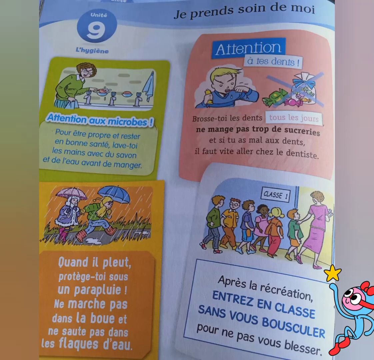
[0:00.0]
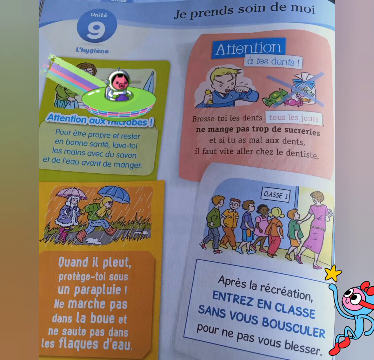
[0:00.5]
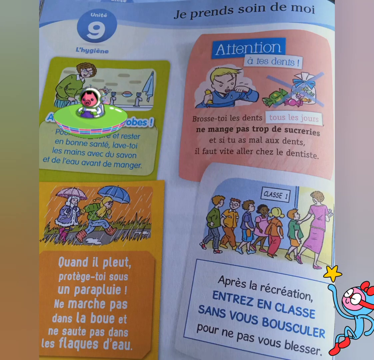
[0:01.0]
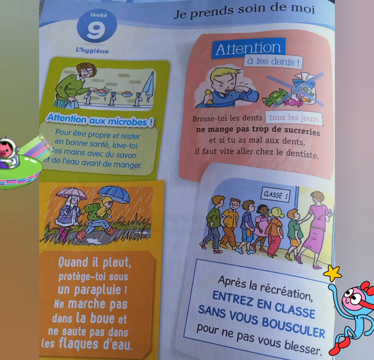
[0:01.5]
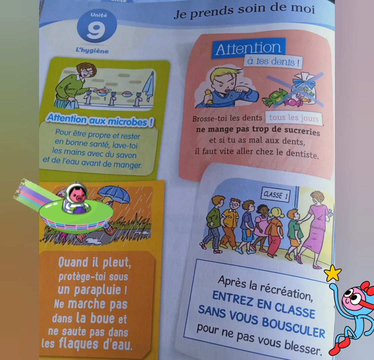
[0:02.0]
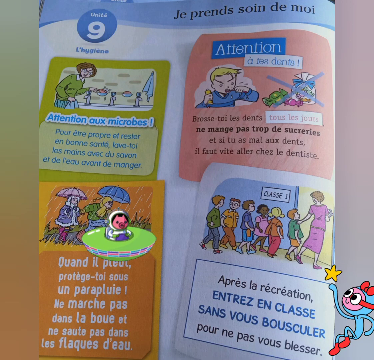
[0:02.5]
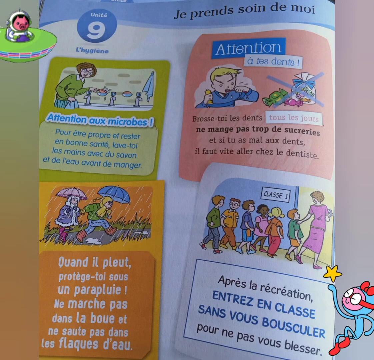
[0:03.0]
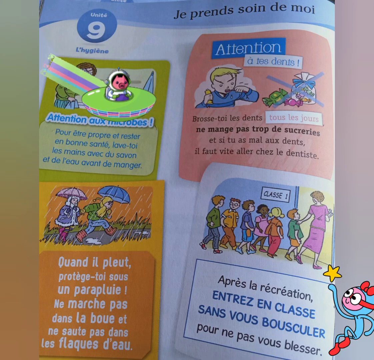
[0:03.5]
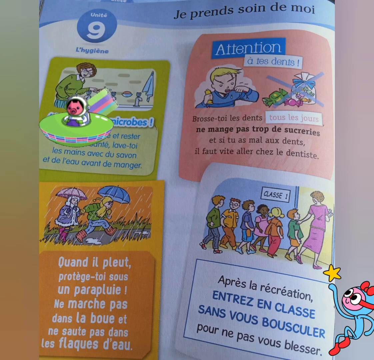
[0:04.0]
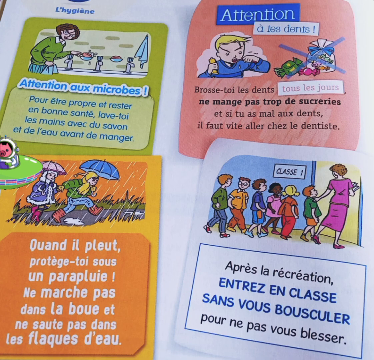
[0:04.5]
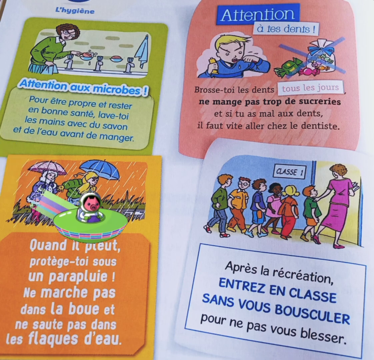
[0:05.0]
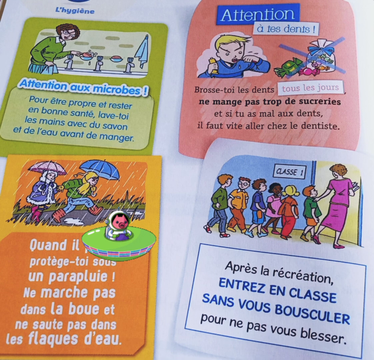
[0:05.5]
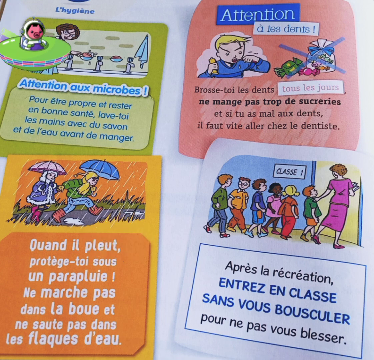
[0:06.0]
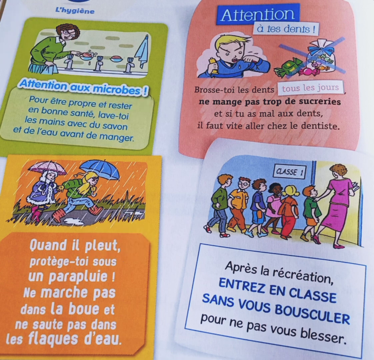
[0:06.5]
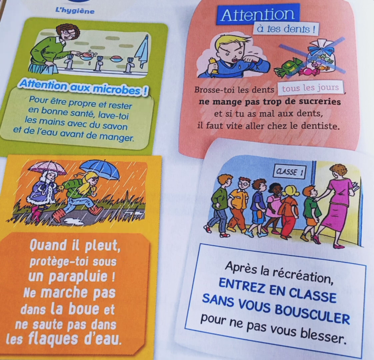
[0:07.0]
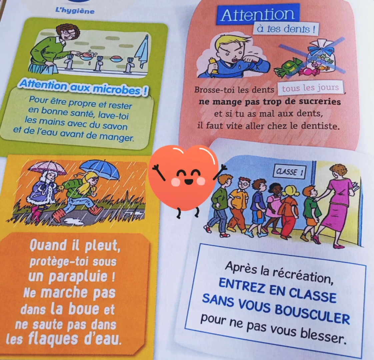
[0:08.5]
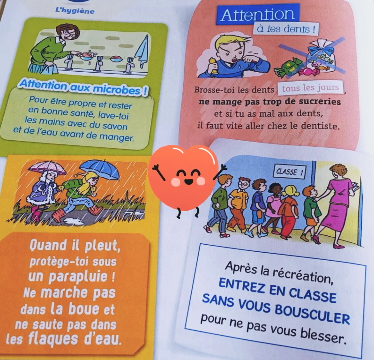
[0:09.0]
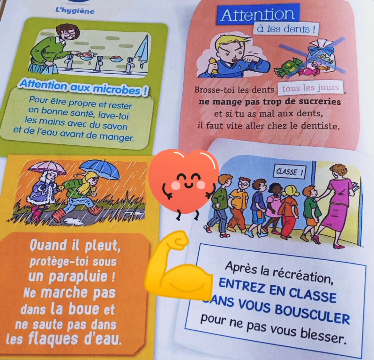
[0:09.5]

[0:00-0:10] A close-up shows a children's French learning book, a regular book with cartoon drawings illustrating different French lessons. An overlay or filter adds a UFO and a little pig spaceman flying across the screen, and in the bottom right another cartoon character swirls a star. Near the end, a heart jumps and a muscle arm pumps.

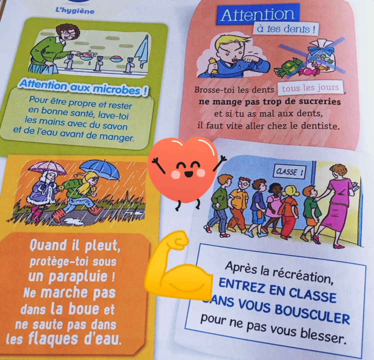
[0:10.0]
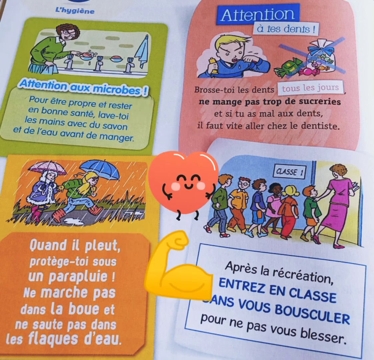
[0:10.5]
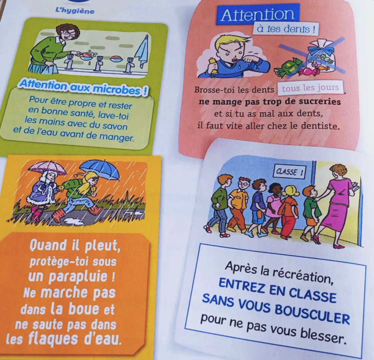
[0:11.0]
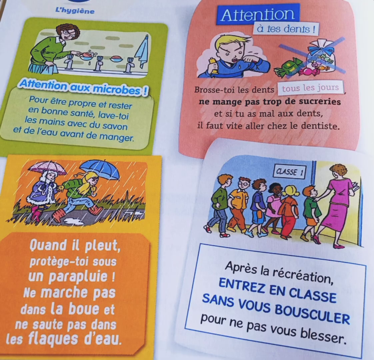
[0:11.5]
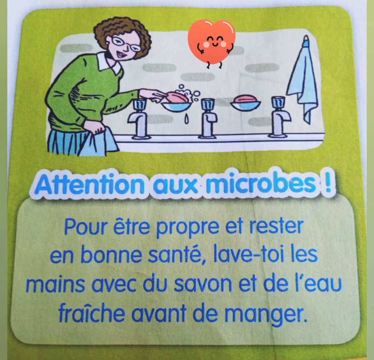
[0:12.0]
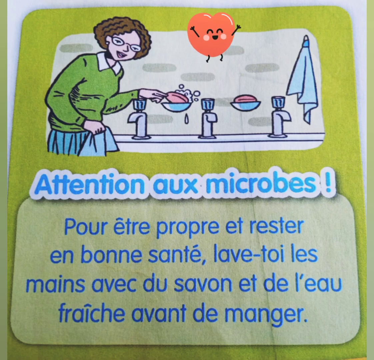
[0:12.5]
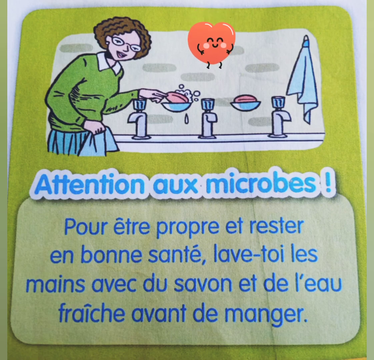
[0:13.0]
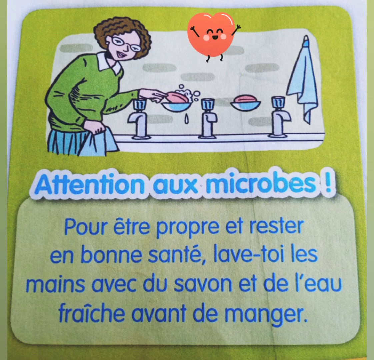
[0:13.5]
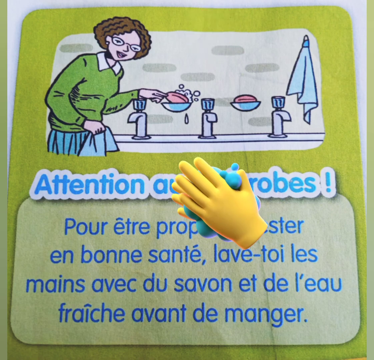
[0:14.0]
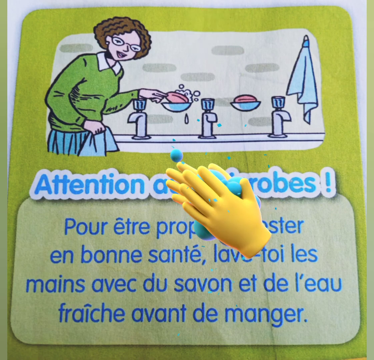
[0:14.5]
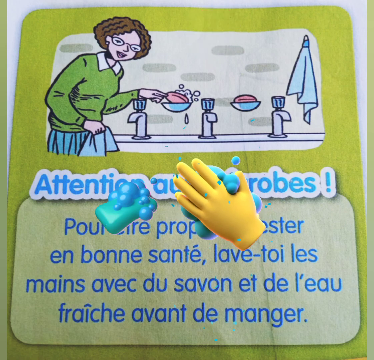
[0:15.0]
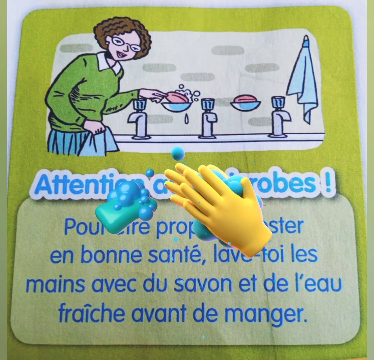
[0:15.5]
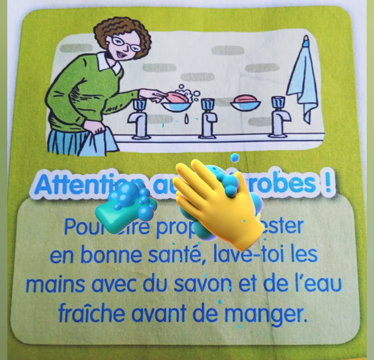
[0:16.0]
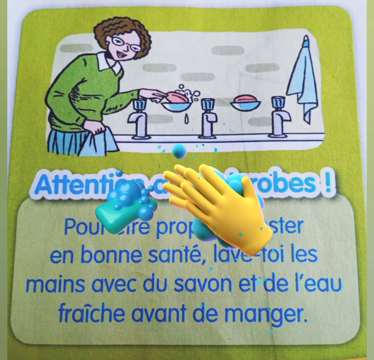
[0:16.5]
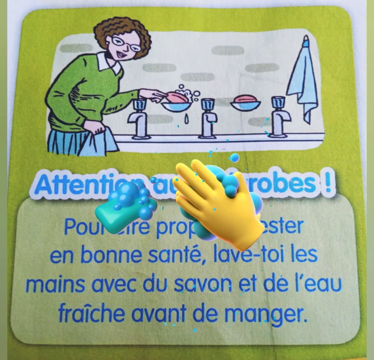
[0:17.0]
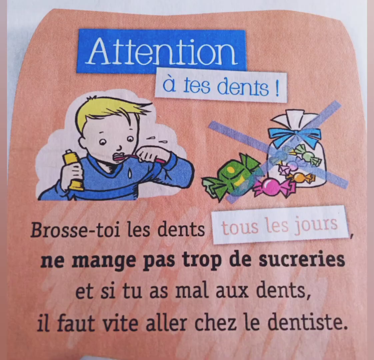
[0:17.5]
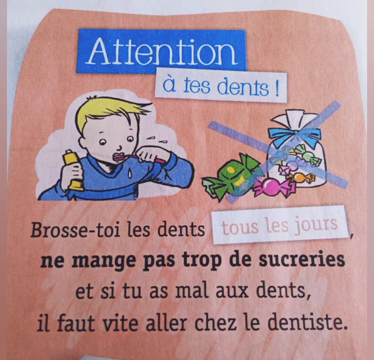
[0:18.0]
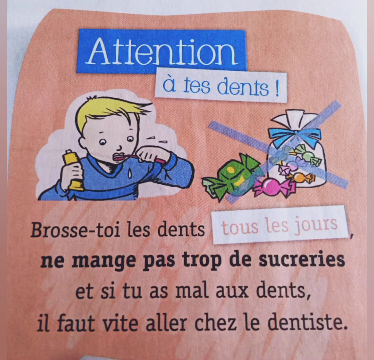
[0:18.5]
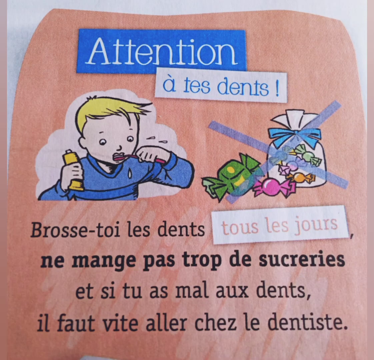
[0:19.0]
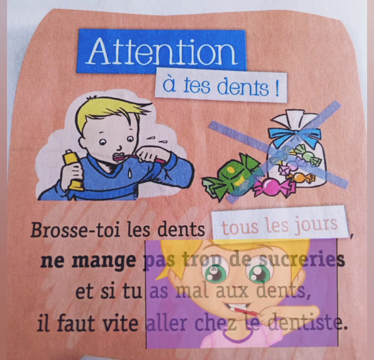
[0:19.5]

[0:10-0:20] The camera zooms in on a close-up of one section of the book, where a woman is washing her hands, perhaps a lesson for children to always stay clean and wash their hands. The heading of this blurb reads "attention, oh, microbes". In the overlay, a heart jumps and an icon shows hands washing together with soap.